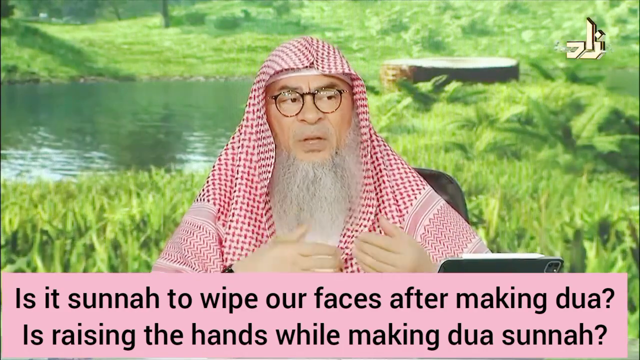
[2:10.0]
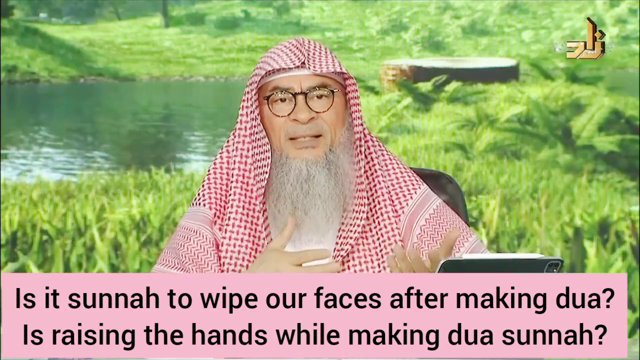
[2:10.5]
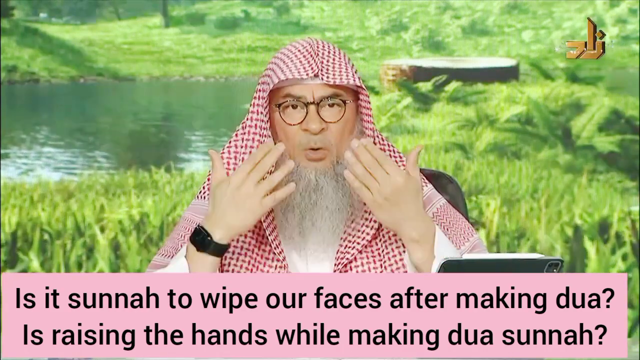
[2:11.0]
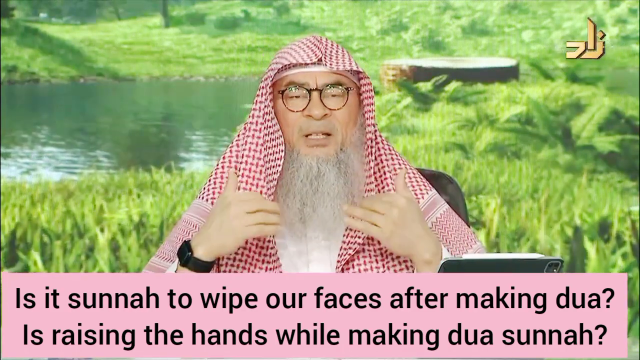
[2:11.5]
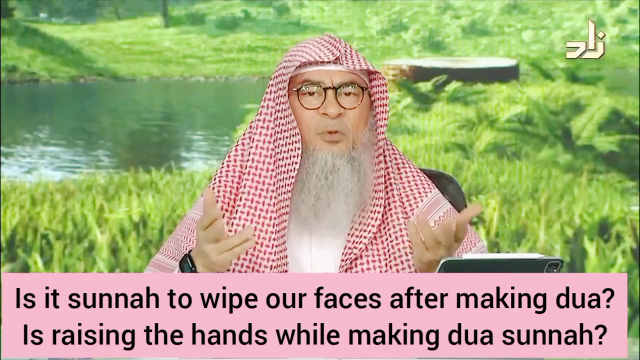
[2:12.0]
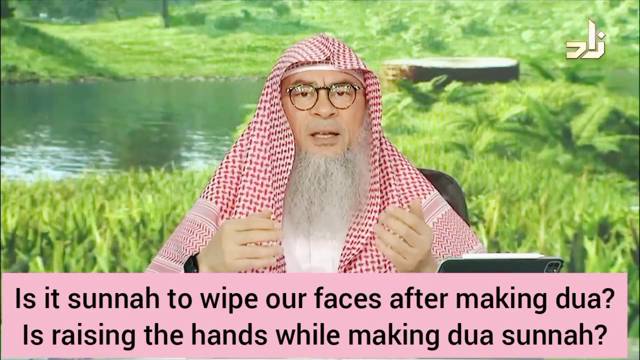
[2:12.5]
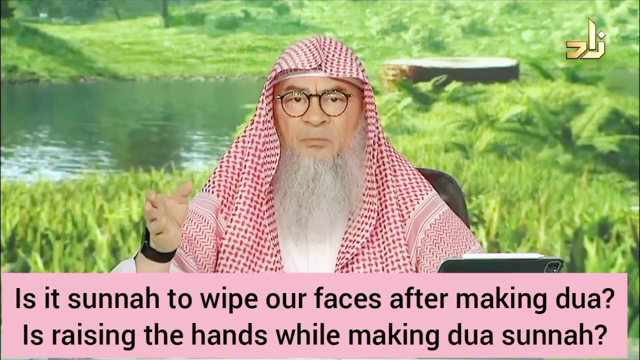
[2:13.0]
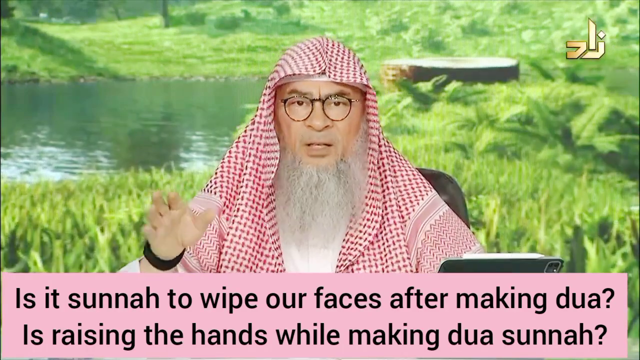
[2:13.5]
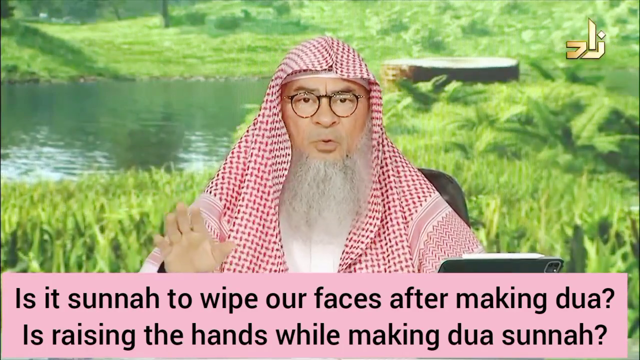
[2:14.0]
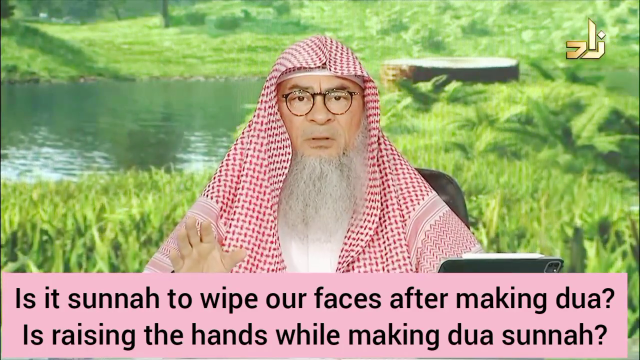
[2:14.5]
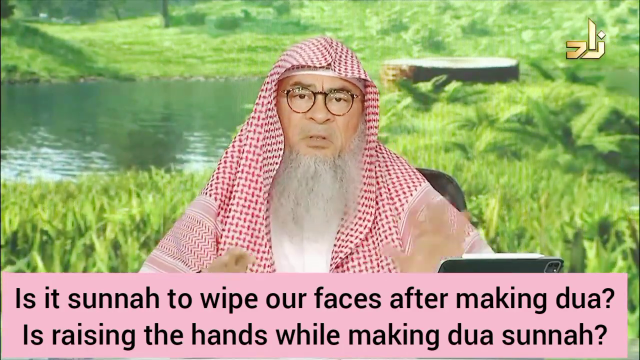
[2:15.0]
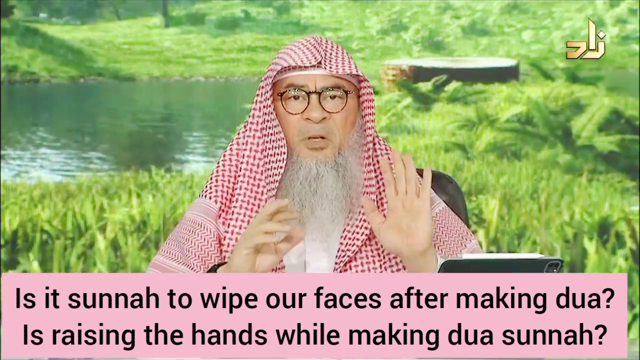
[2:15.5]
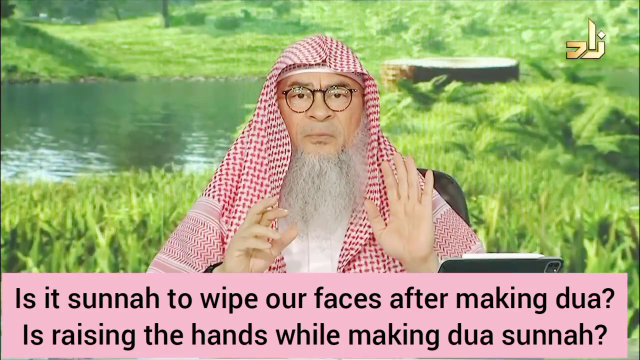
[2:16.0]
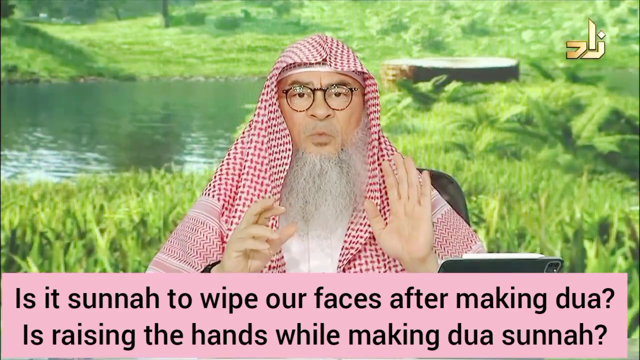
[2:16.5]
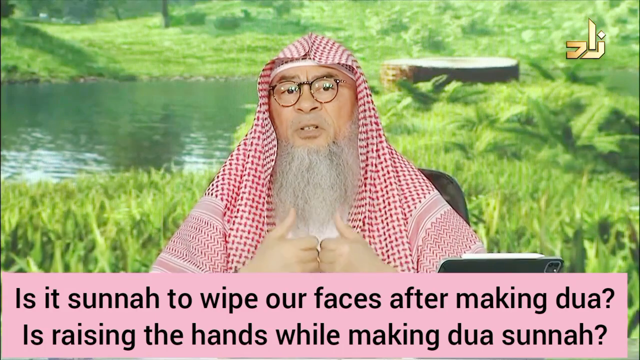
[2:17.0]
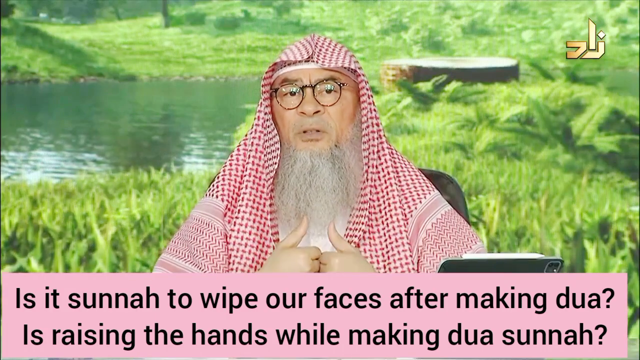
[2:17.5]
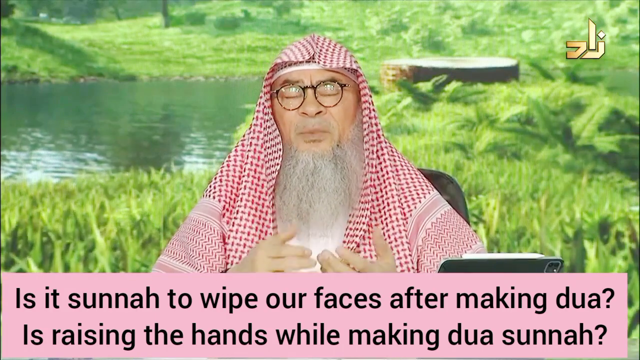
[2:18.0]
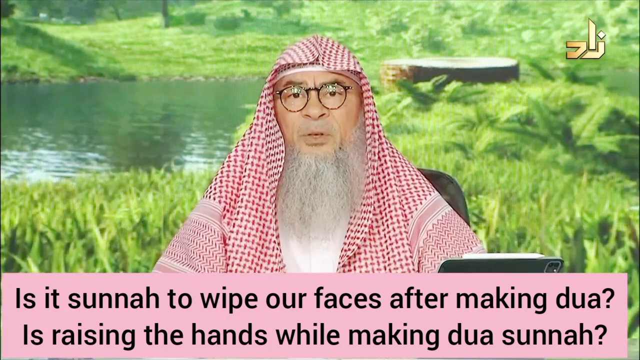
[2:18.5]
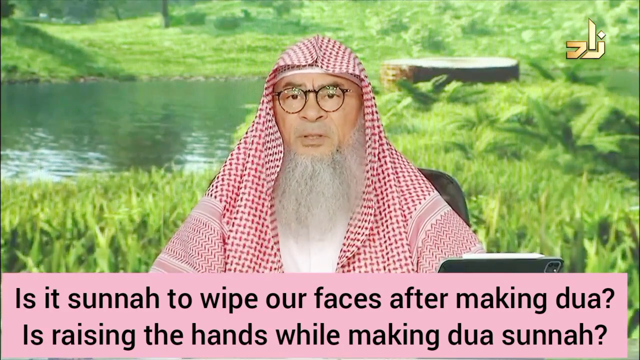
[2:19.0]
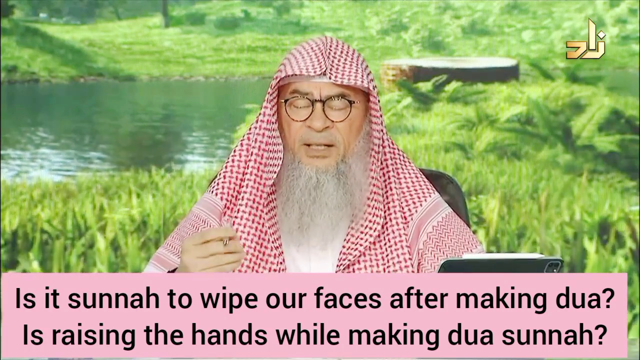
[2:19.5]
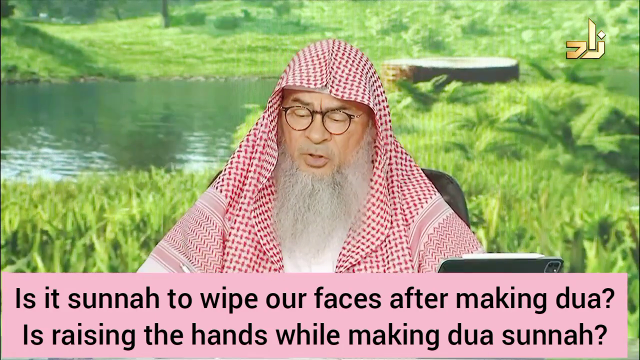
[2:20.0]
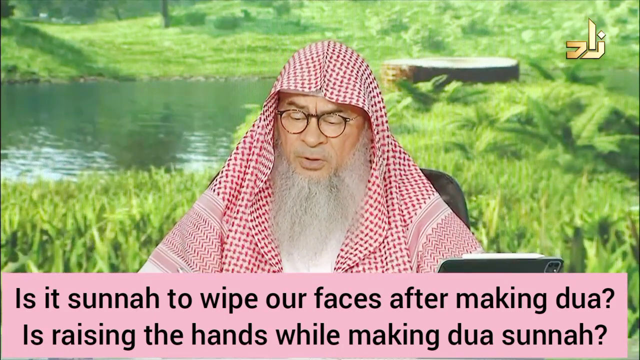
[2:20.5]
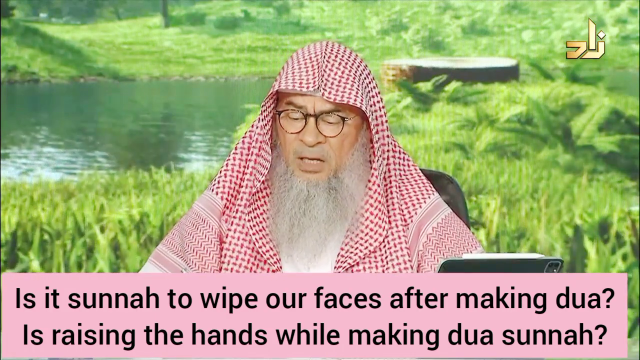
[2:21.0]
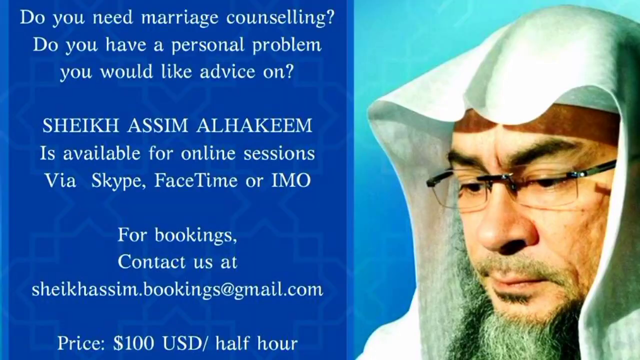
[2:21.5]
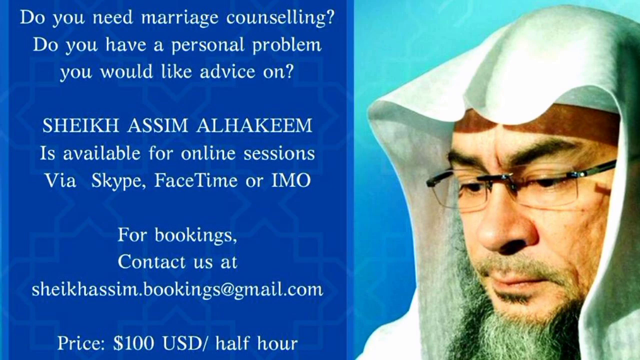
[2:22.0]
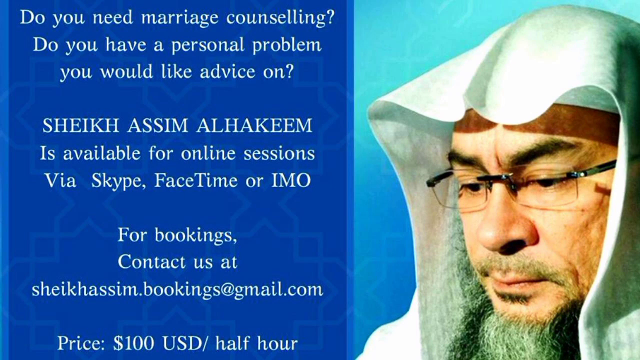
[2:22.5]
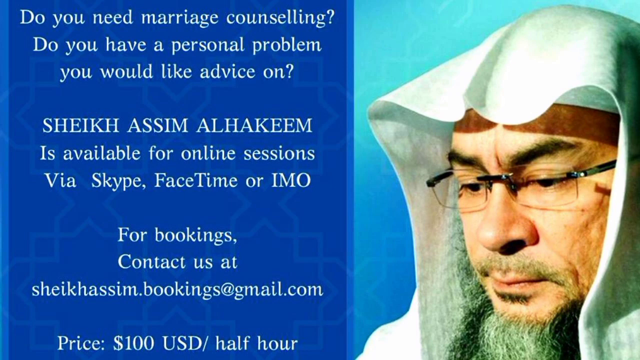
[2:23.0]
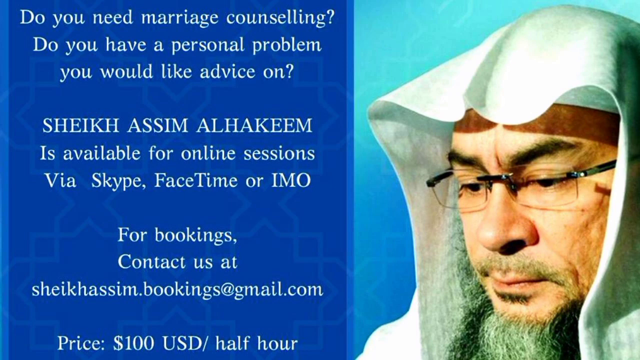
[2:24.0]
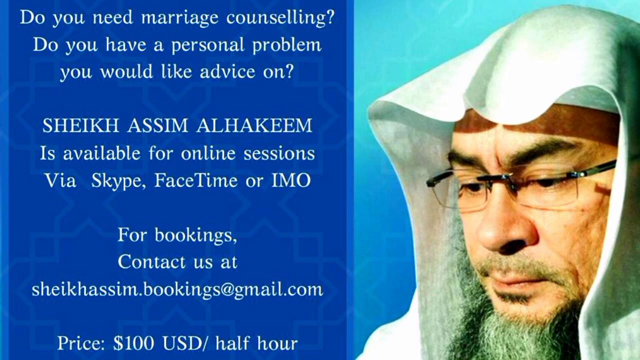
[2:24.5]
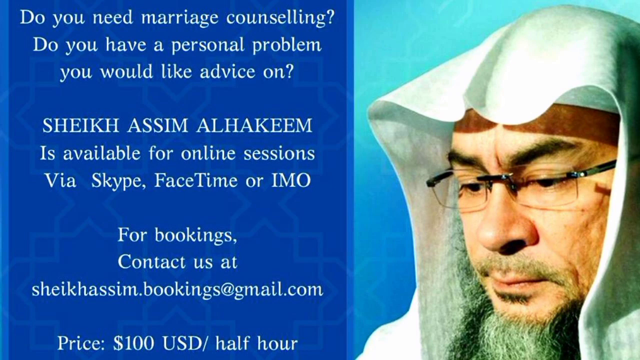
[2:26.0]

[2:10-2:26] The host moves his head and hands a lot as he talks. Toward the end, he whips out a pen with one hand and goes to jot something down. Then a screen appears with a photo of the man on the right side. The background is light blue on the right and dark blue on the left, with white text on the left that reads "do you need marriage counseling do you have a personal problem you would like advice on Shikha Asim Al-Kahim is available for online sessions via Skype FaceTime or IMO for bookings contact us at shikhasam.bookings@gmail.com."